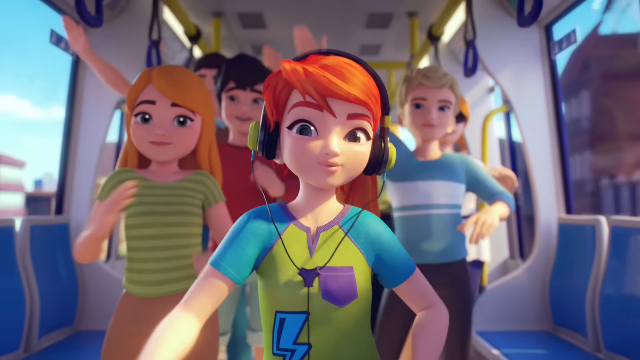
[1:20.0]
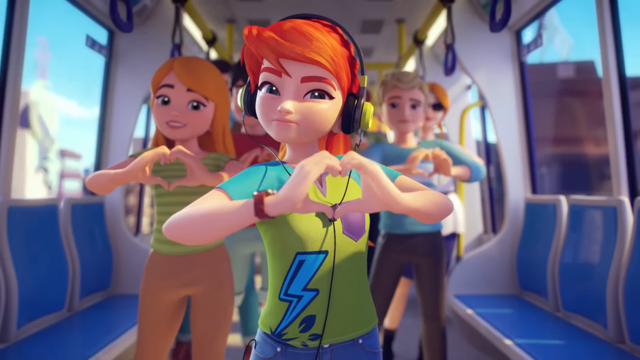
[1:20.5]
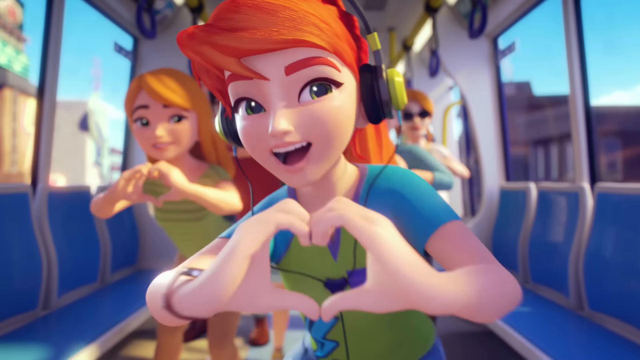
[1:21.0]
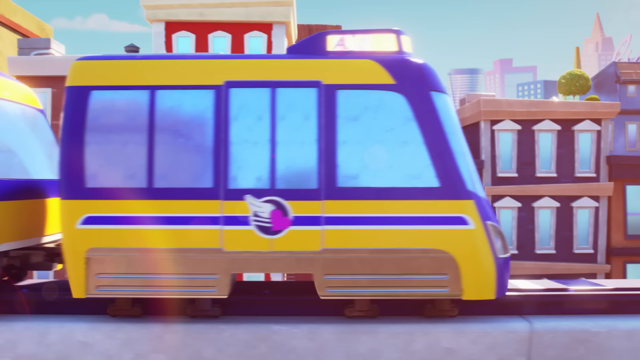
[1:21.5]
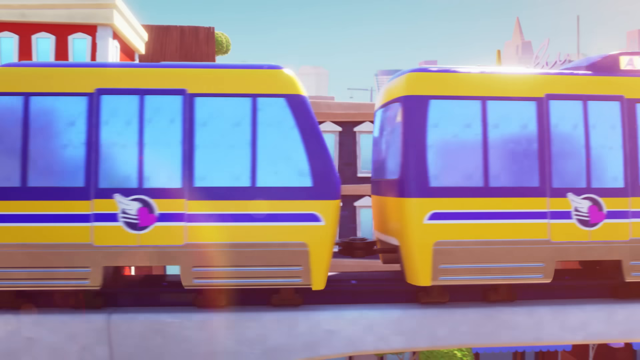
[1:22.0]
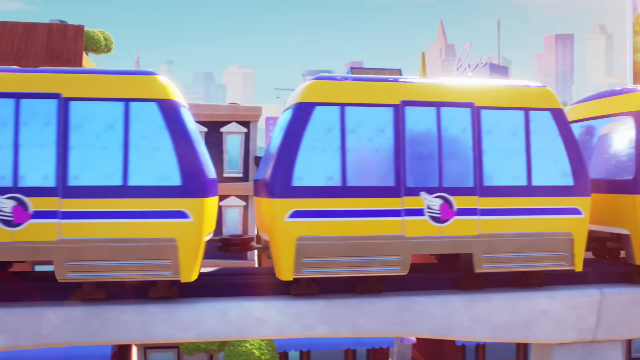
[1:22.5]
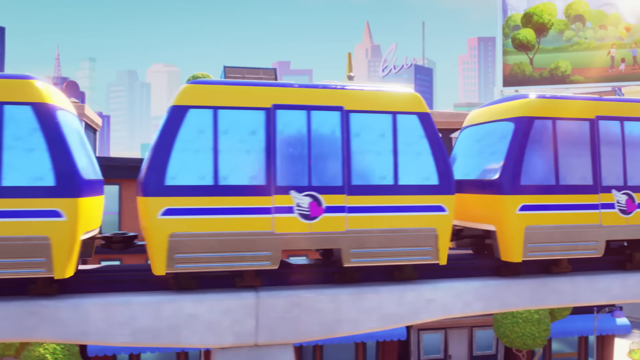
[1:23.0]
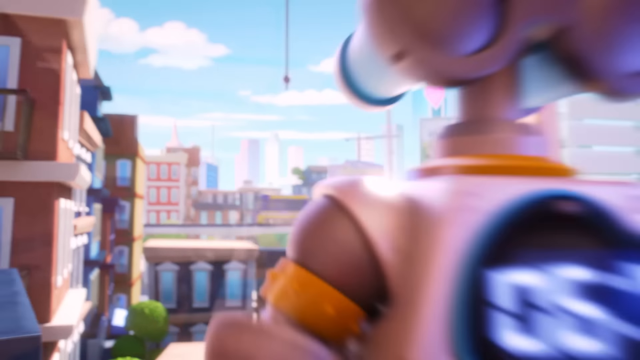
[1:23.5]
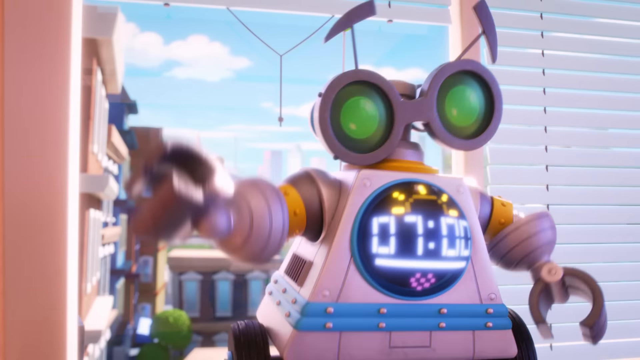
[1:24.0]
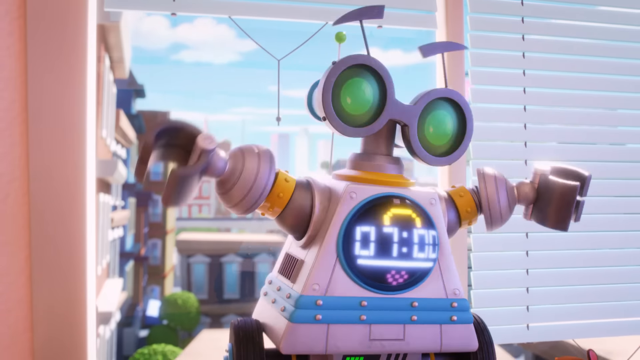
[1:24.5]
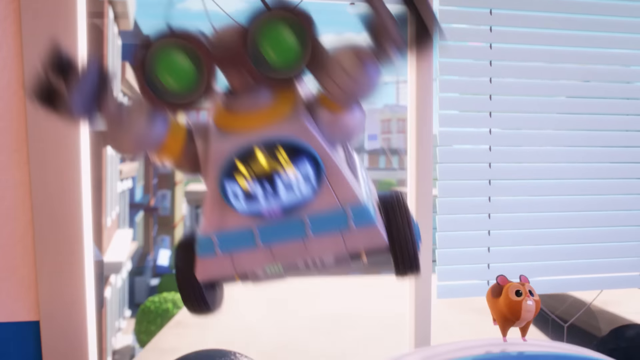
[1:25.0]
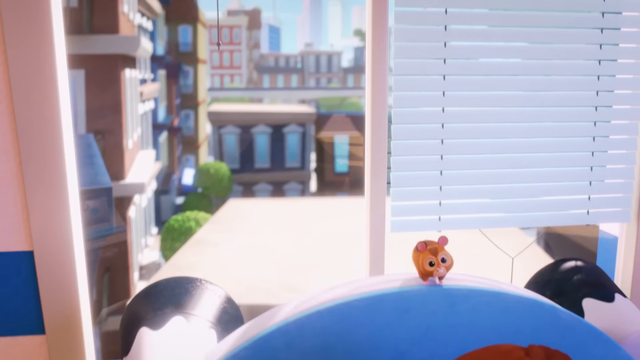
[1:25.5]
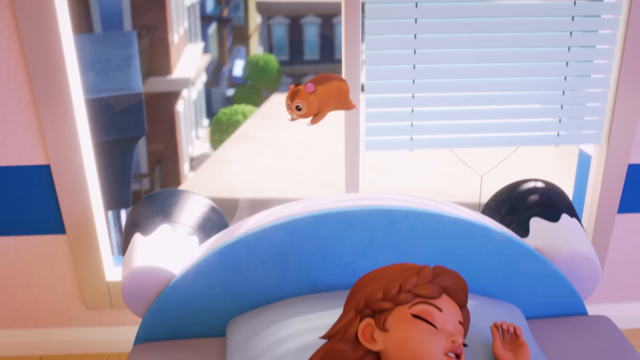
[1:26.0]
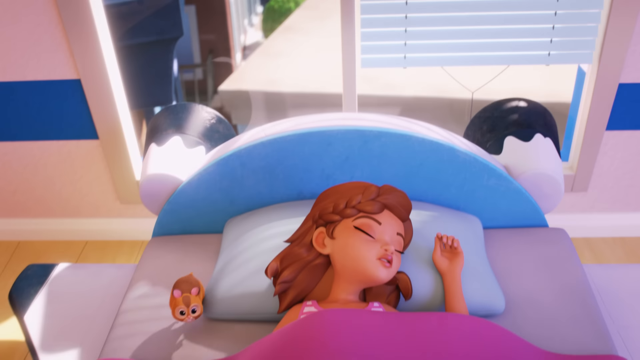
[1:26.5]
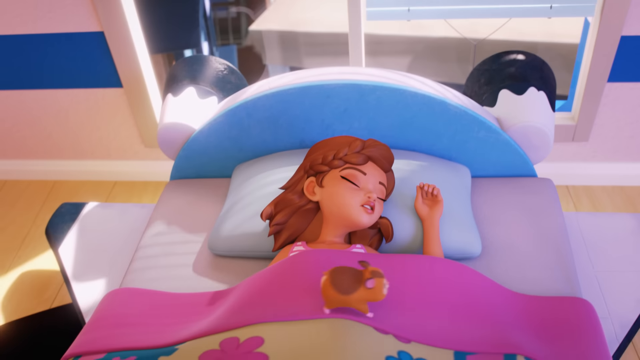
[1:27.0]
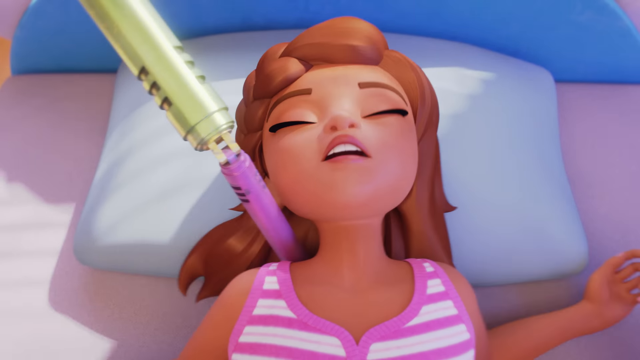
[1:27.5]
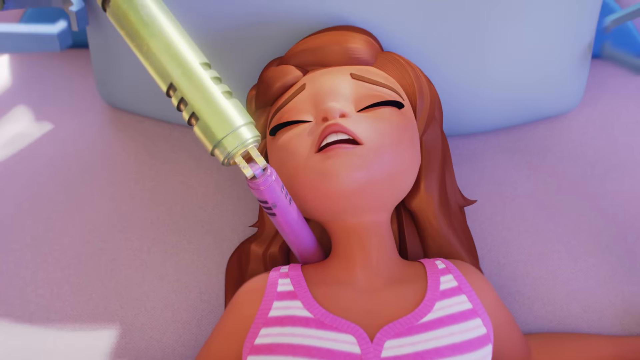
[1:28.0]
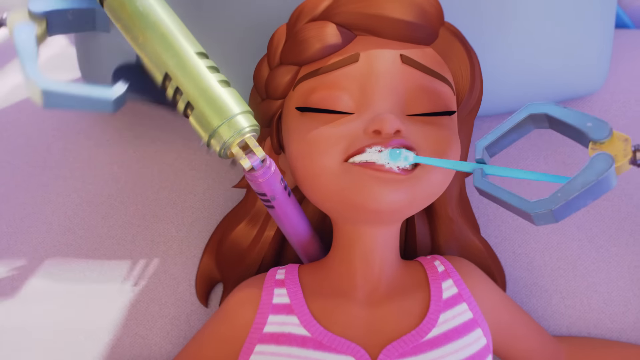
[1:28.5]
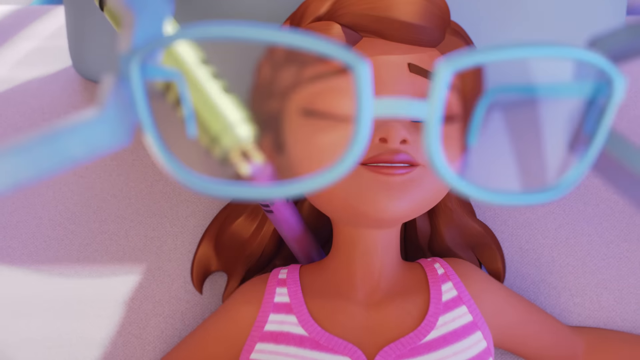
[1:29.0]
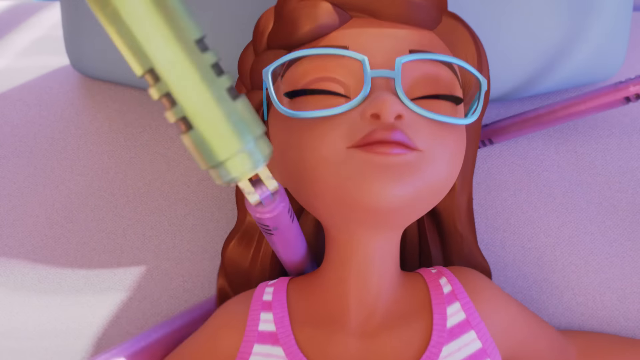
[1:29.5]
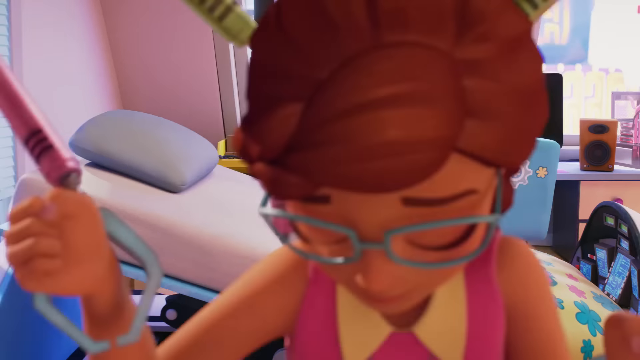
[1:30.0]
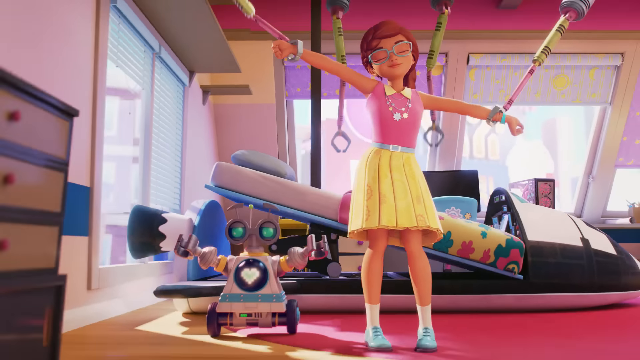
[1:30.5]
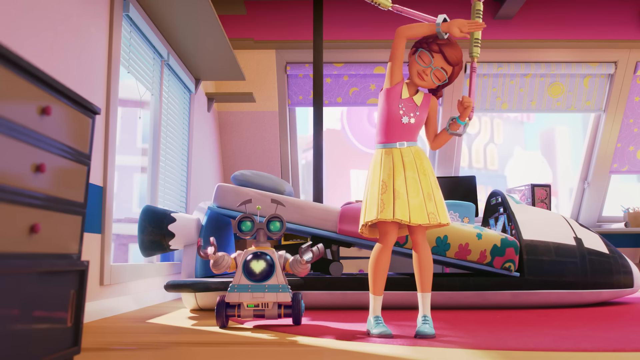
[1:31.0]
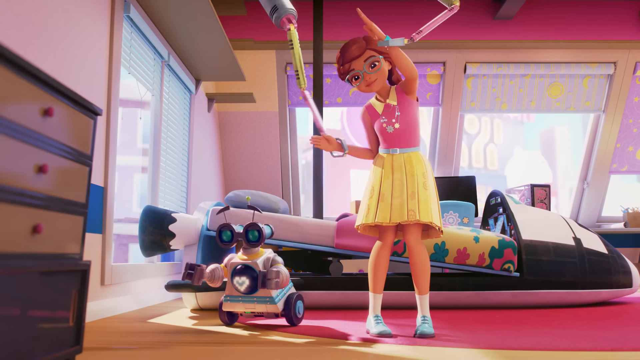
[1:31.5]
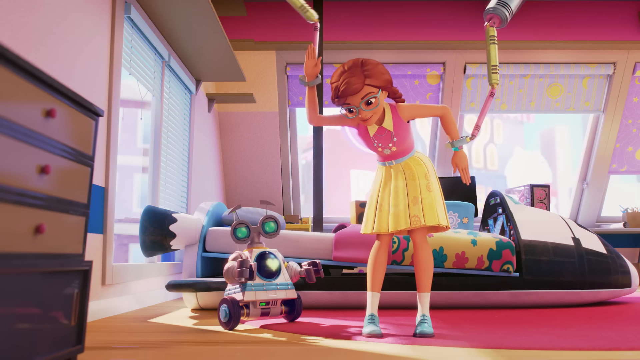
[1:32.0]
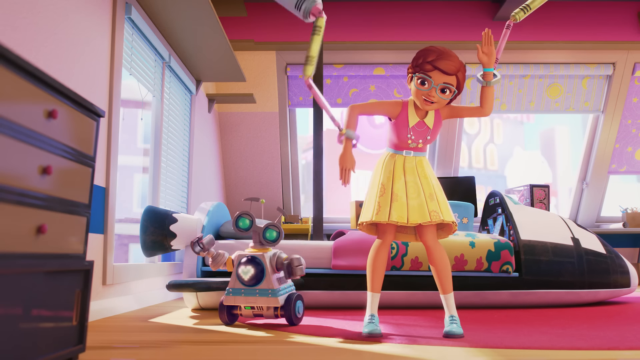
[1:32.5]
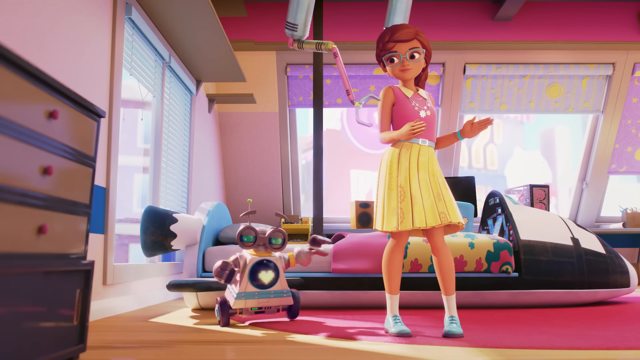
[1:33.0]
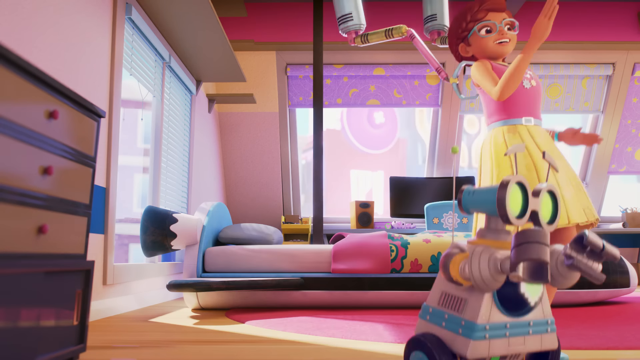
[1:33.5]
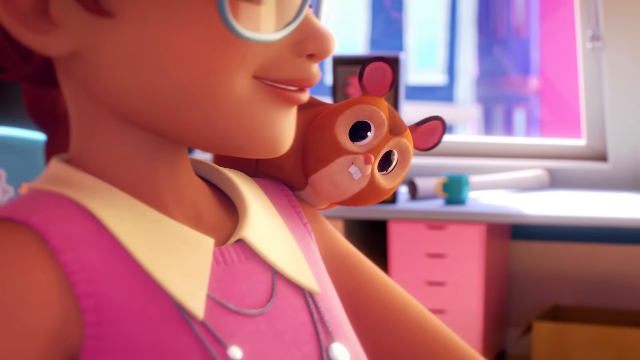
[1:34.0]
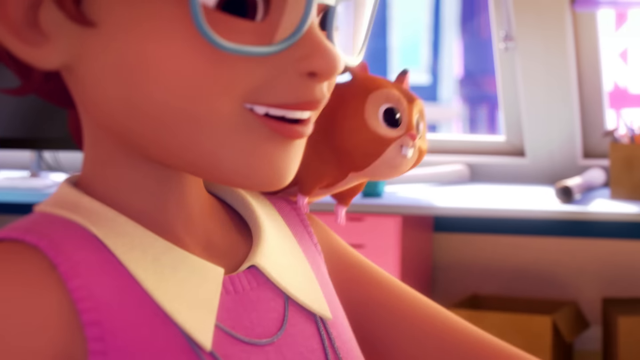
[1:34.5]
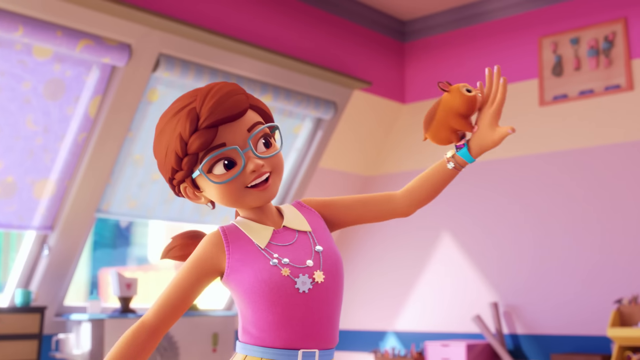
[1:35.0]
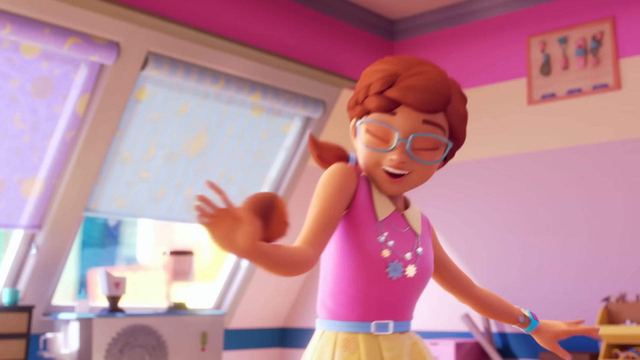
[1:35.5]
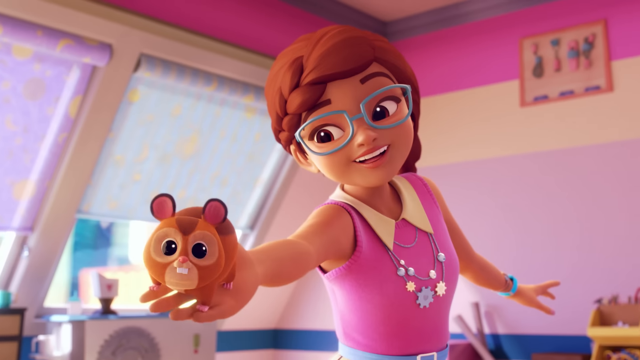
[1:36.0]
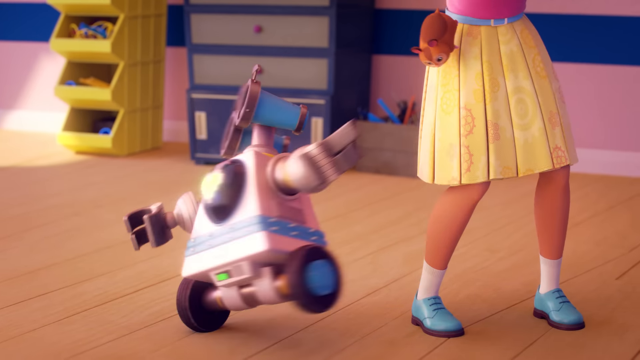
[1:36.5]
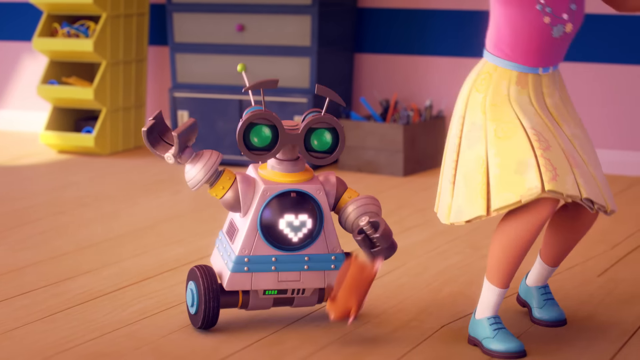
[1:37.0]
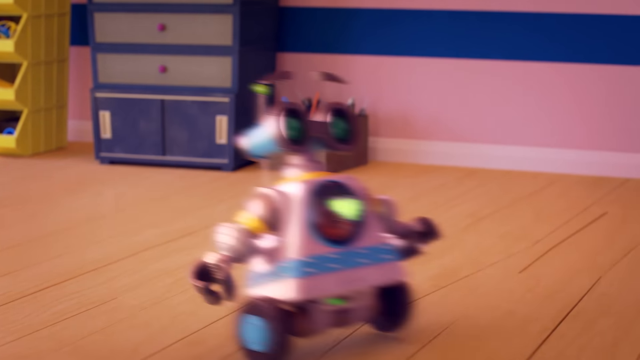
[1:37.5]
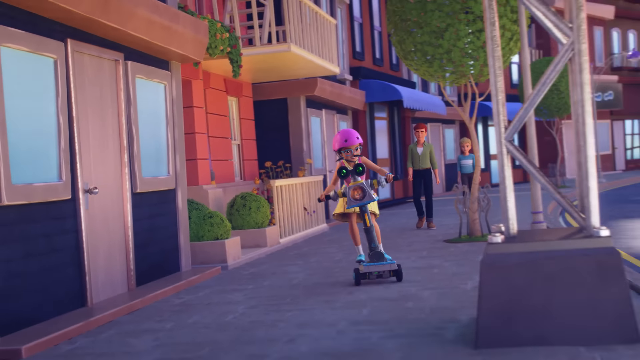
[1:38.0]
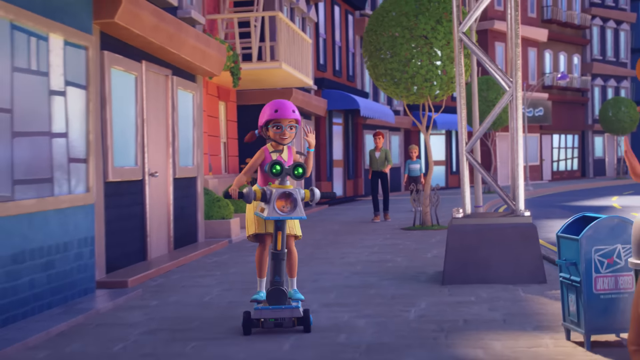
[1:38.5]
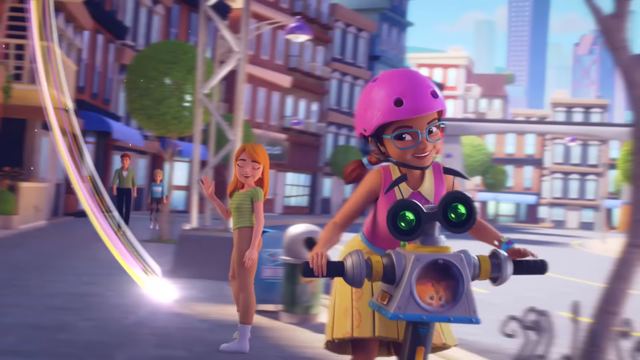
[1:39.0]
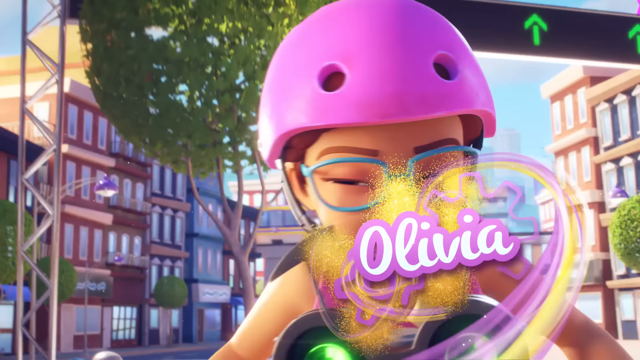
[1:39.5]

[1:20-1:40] Mia keeps dancing on the train, which is apparently almost at the station in the city. Another friend, who looks like she is running late, uses all sorts of automation to get ready for the day, helped by little animal and robot sidekicks. She sings and dances even though she has just woken up, and she looks like she makes it out of the house with her robot and gerbil, most likely to meet Mia at the station.